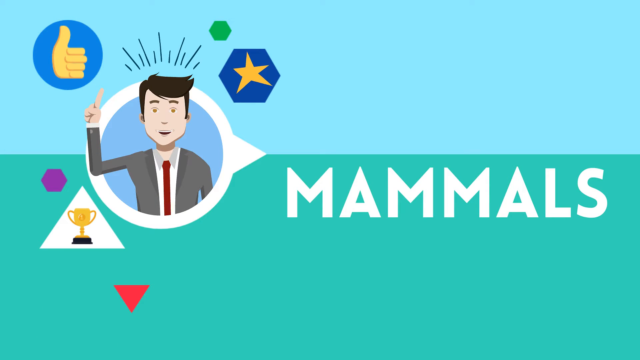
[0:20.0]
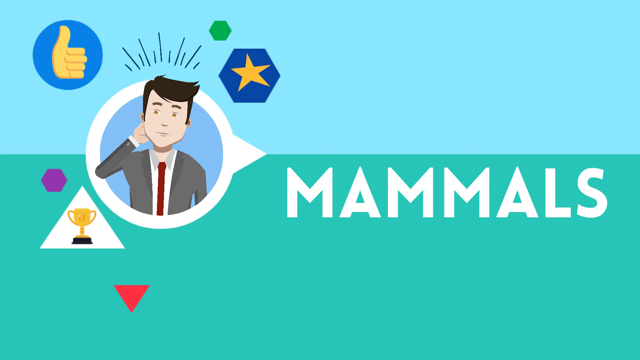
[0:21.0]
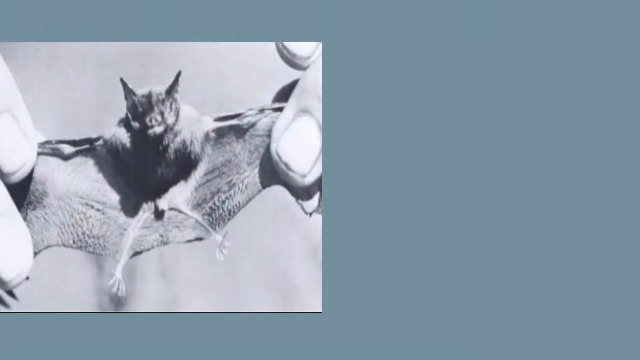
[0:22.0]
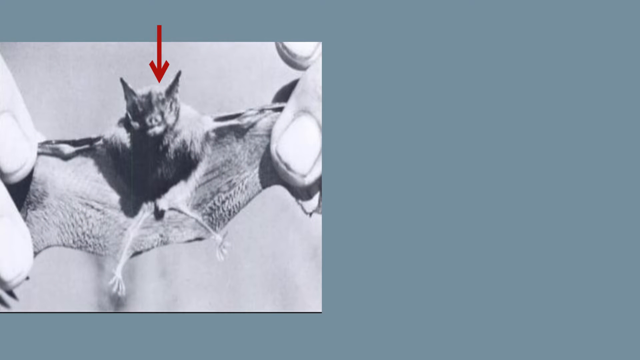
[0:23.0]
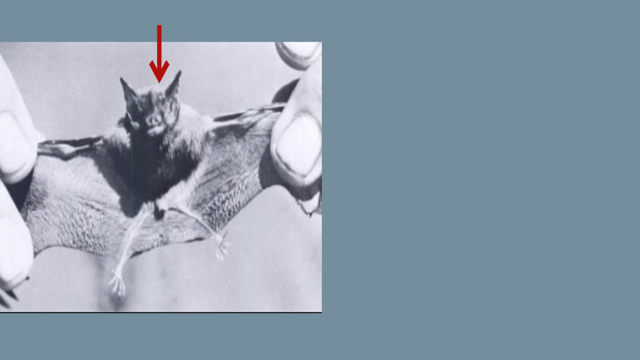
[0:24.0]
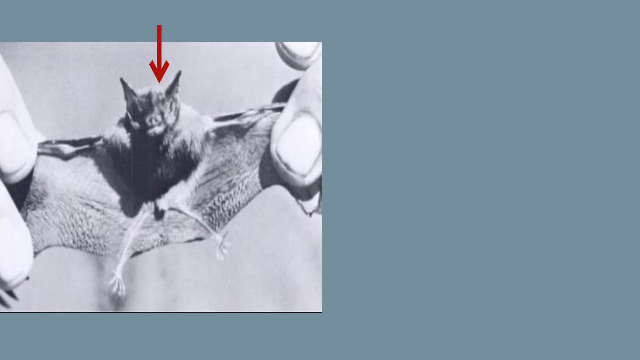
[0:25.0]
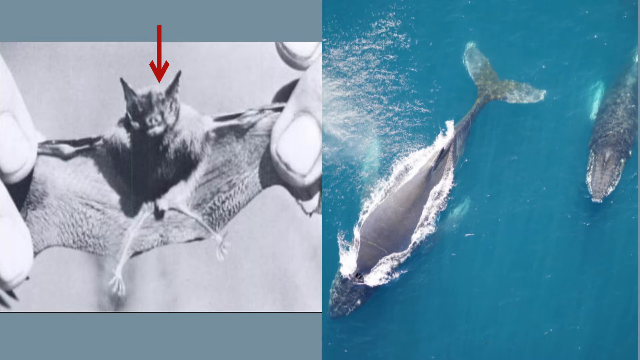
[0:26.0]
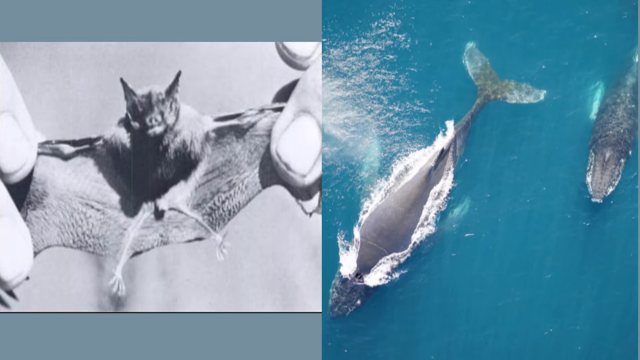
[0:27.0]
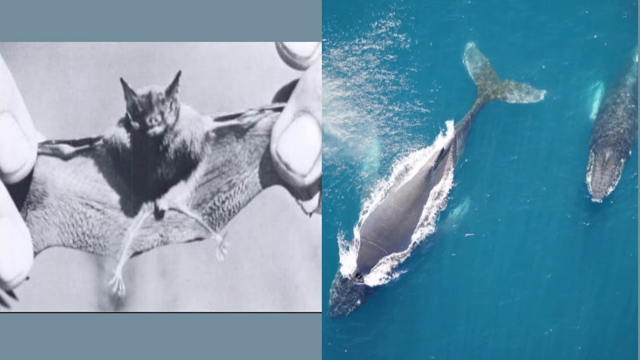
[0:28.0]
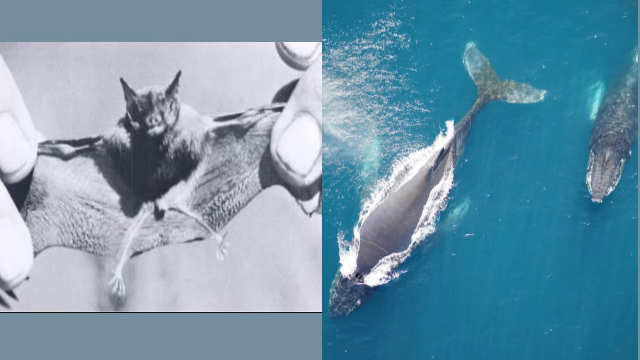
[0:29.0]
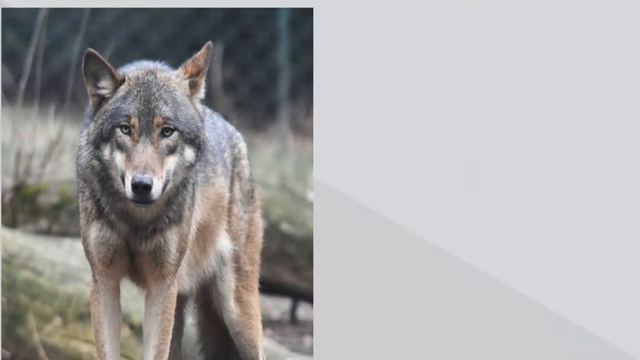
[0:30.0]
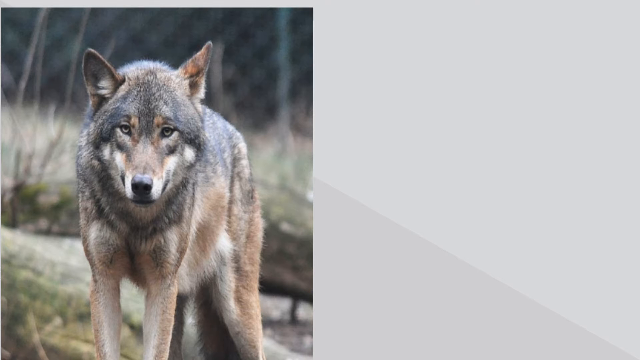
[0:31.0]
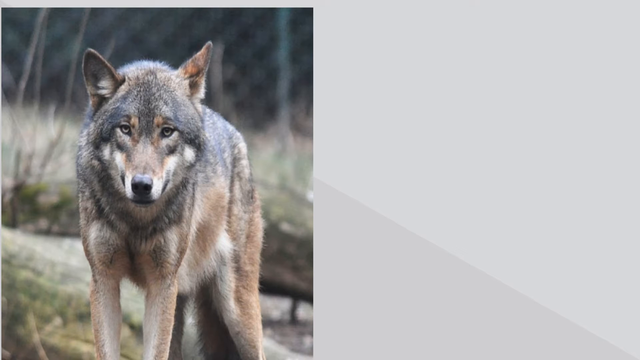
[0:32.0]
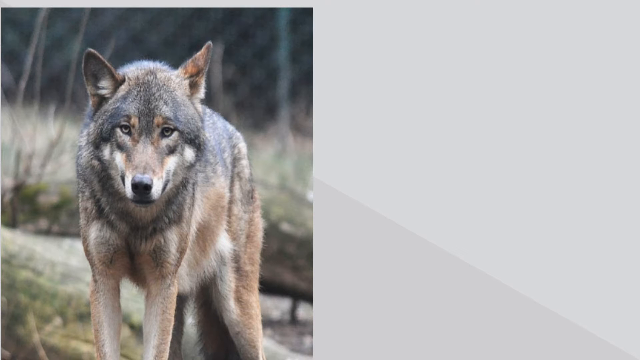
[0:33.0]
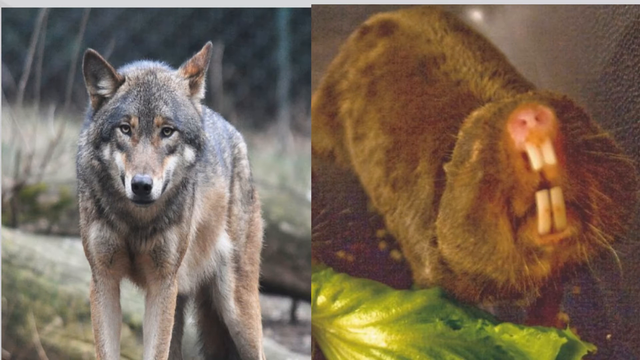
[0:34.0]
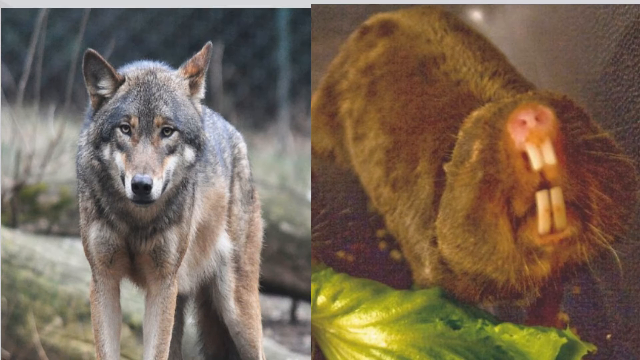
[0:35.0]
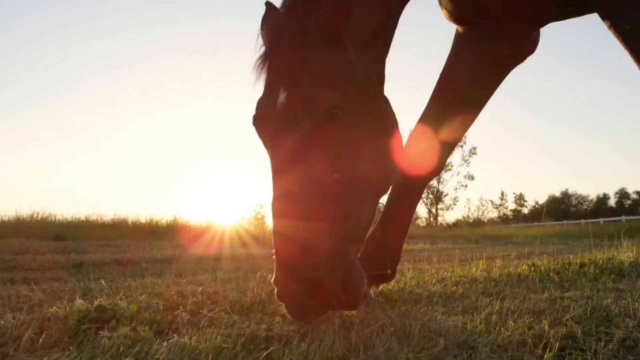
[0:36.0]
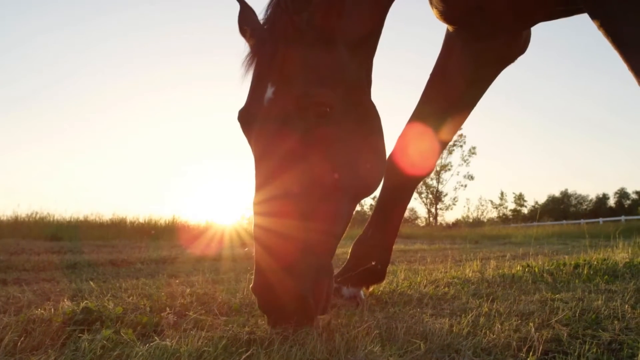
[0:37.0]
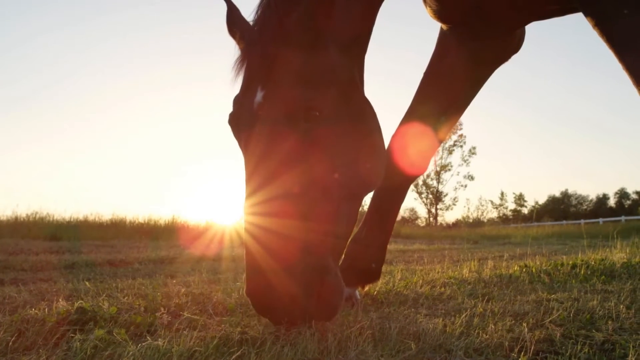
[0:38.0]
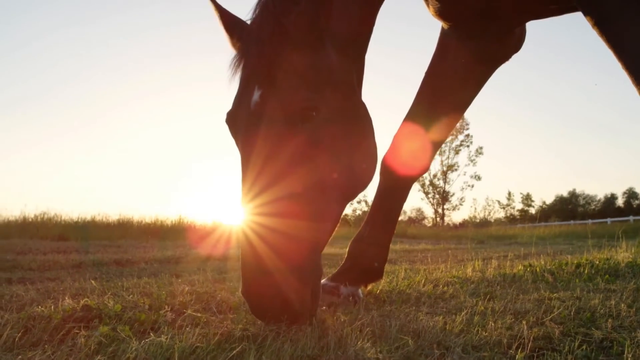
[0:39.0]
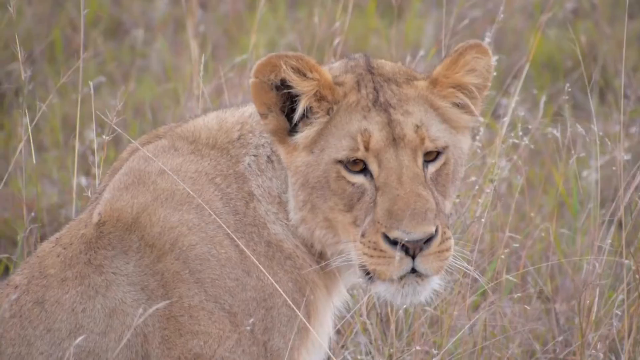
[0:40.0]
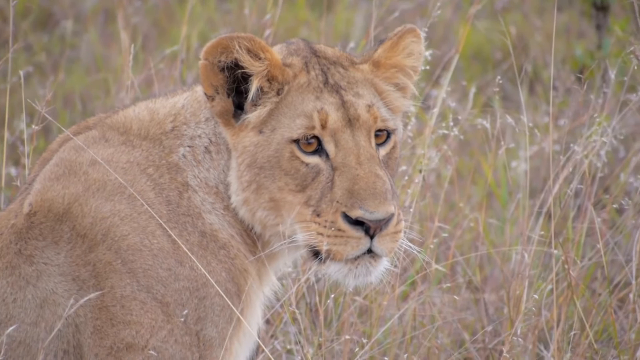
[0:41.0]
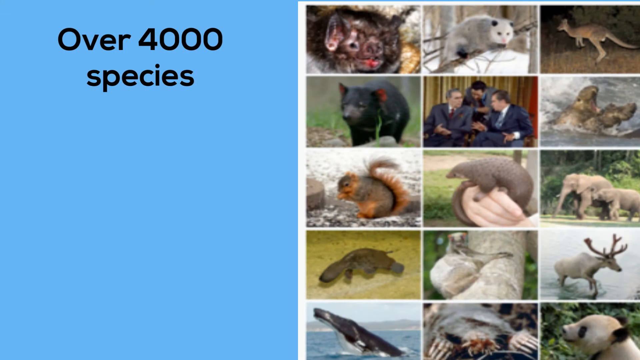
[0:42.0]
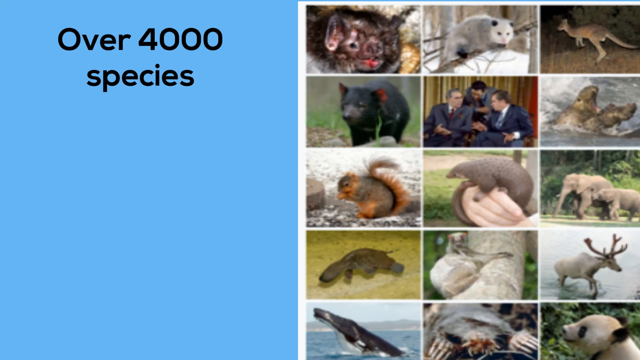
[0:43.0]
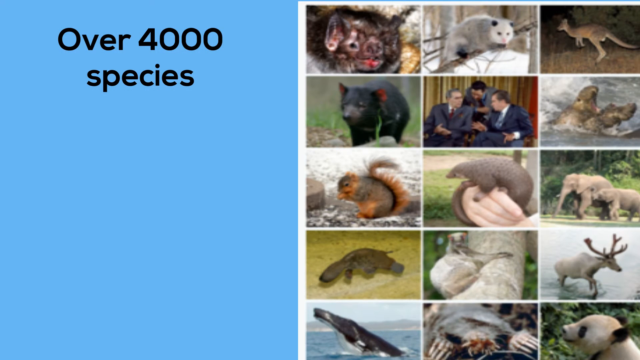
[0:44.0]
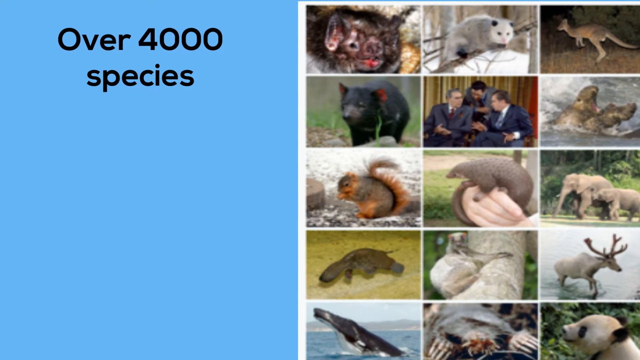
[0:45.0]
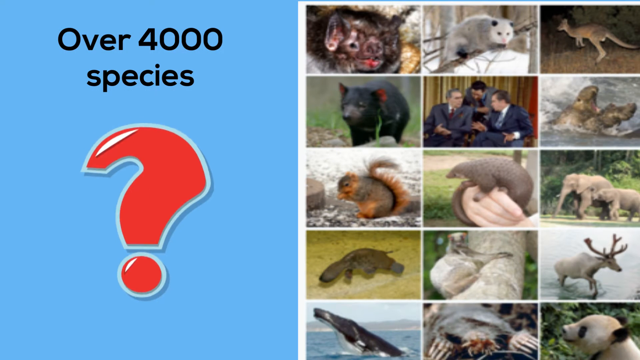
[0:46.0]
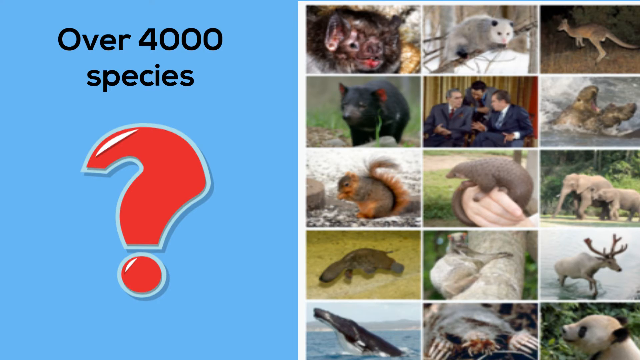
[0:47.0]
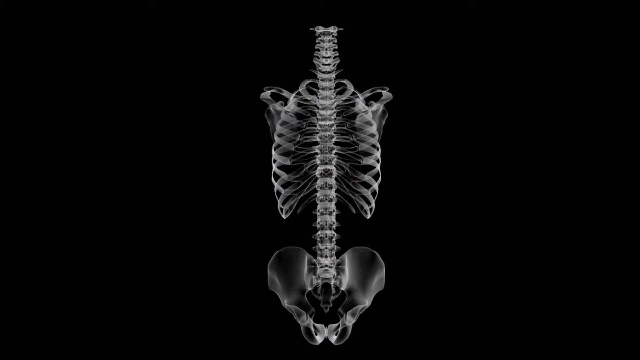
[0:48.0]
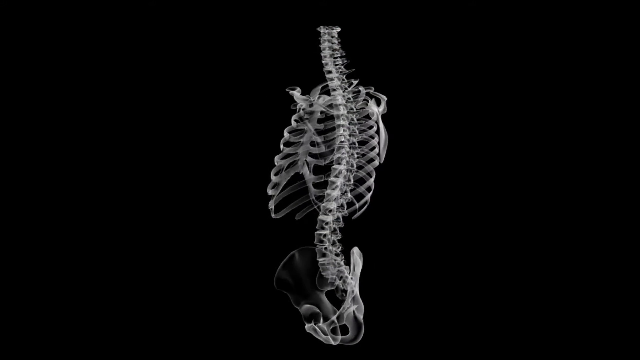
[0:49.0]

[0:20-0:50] What seems to be a pet is held by someone; the pet is on display and has been stressed out. Next comes what seems to be a whale, not that big, about the size of a regular whale. A wolf follows, then what looks like a guinea pig, then a lion. A presentation page then shows over 400 animals. A guinea pig and a horse appear, the horse seemingly on a horse range. All the animals seem to be in their natural environments.